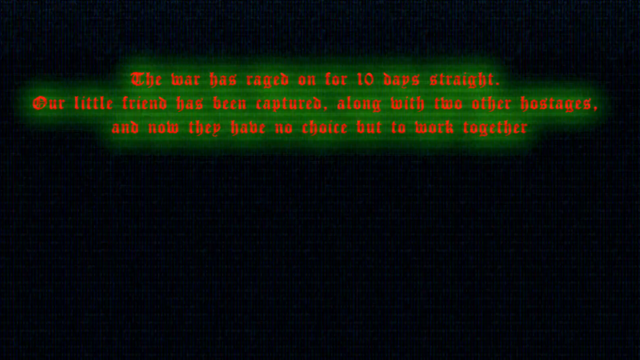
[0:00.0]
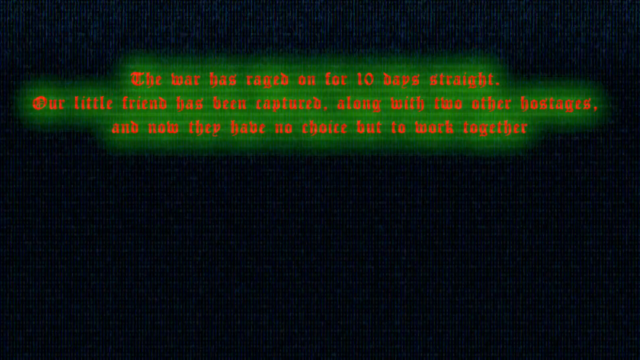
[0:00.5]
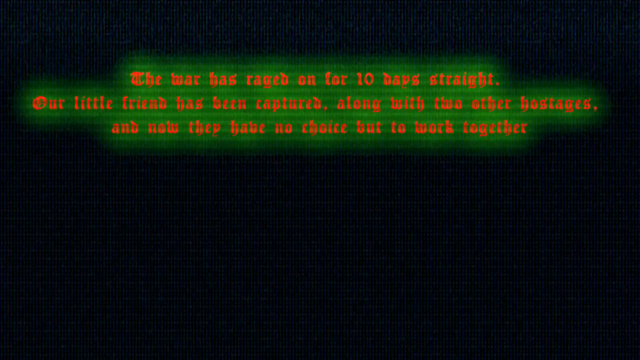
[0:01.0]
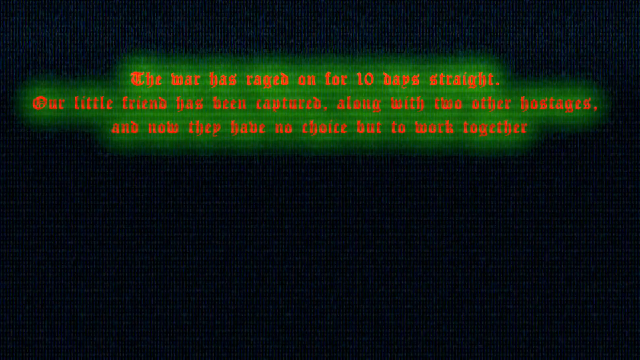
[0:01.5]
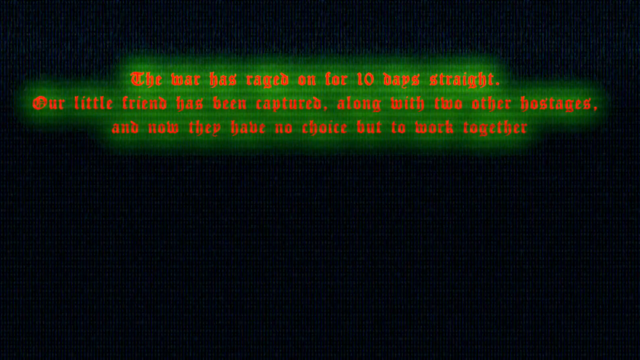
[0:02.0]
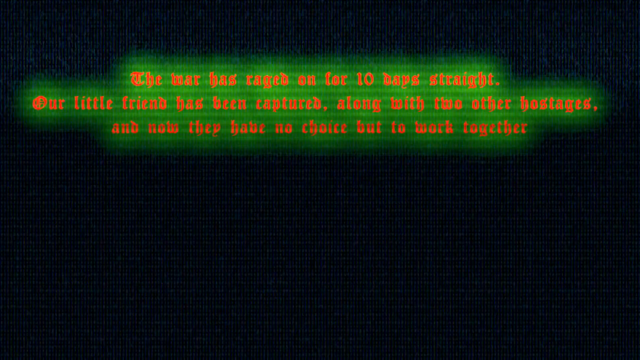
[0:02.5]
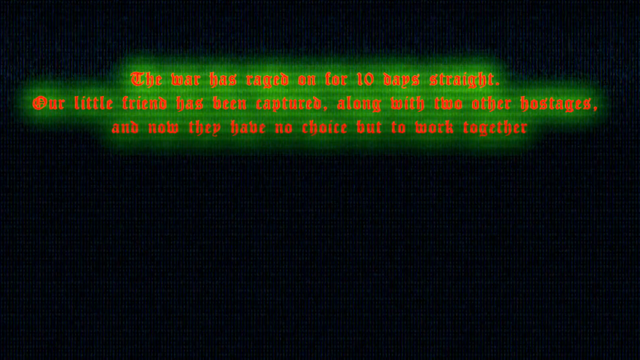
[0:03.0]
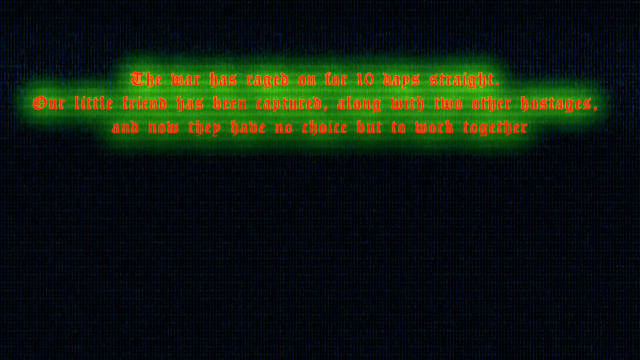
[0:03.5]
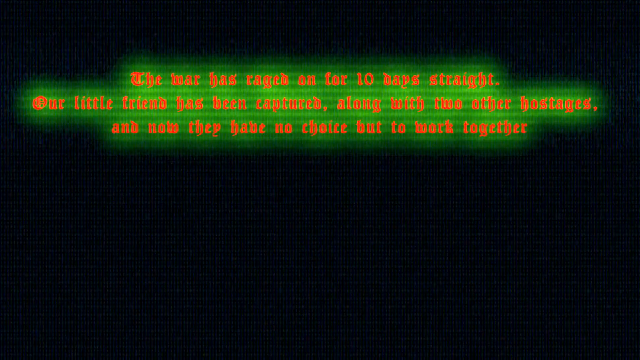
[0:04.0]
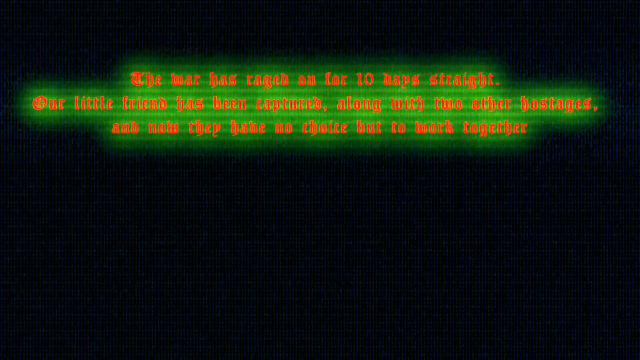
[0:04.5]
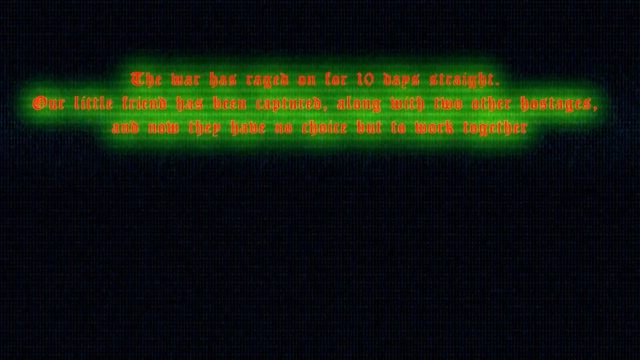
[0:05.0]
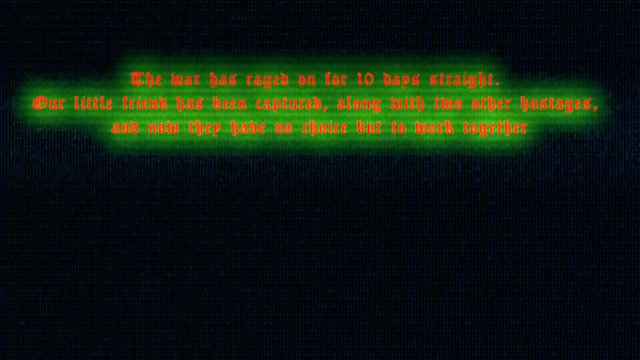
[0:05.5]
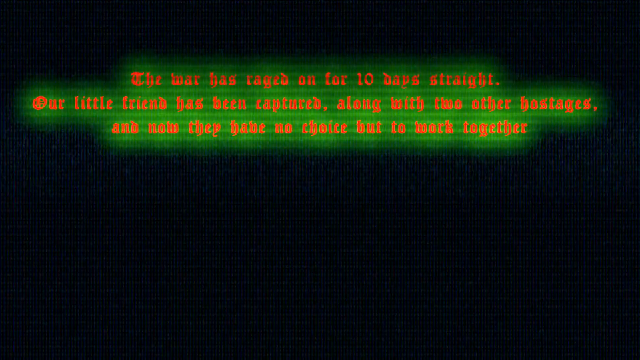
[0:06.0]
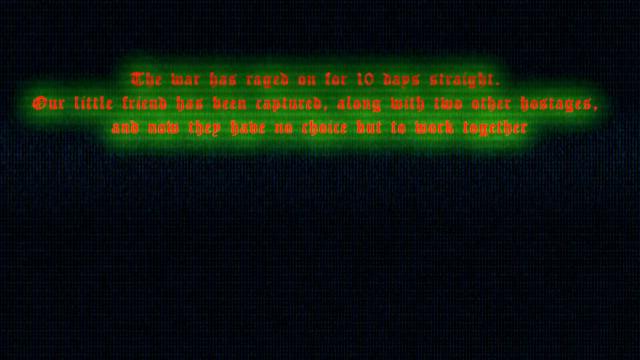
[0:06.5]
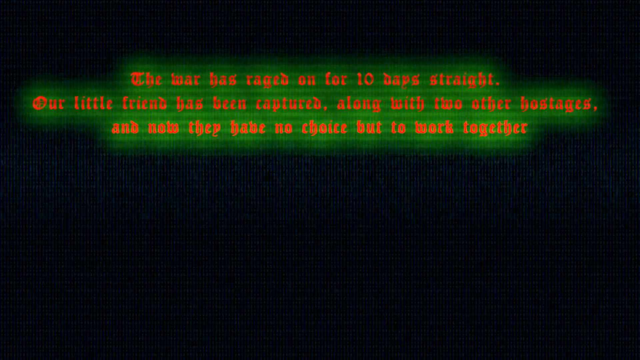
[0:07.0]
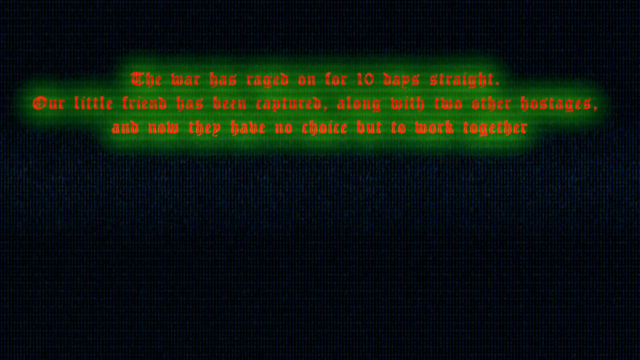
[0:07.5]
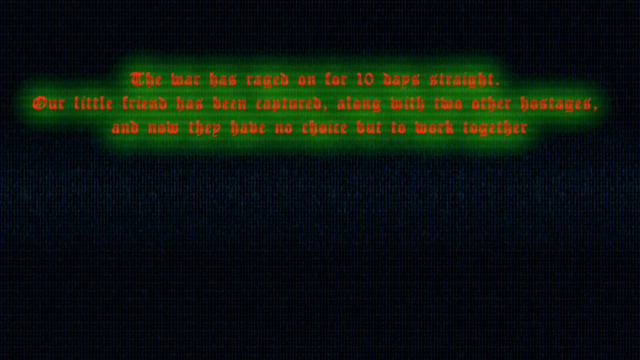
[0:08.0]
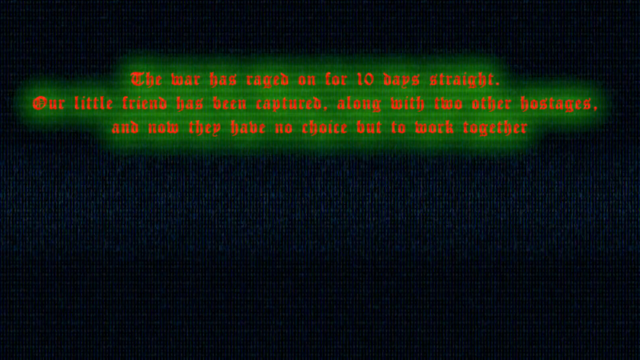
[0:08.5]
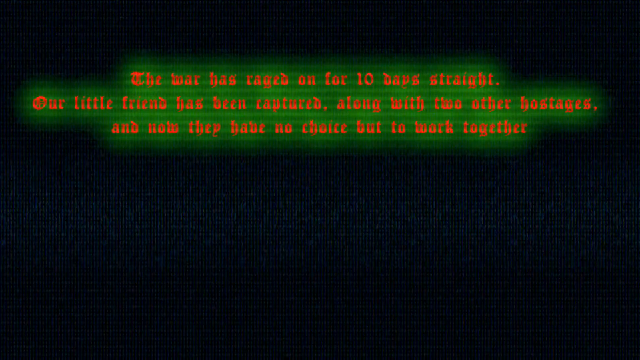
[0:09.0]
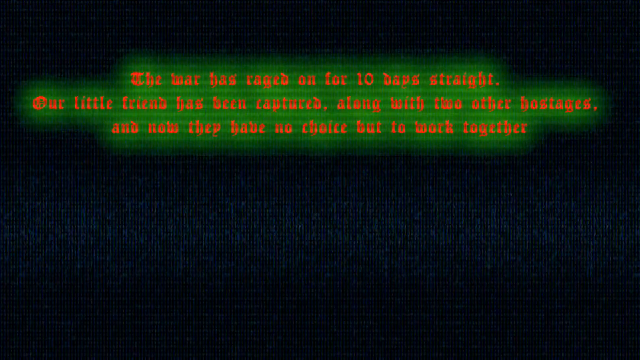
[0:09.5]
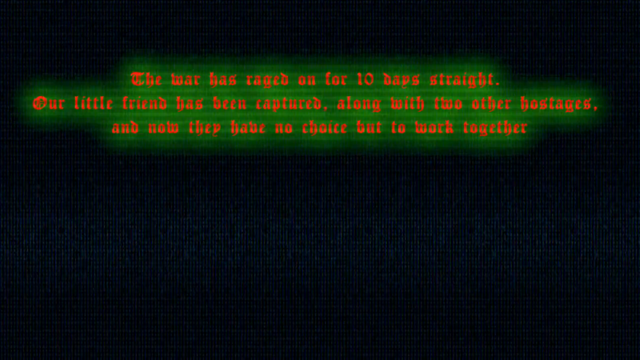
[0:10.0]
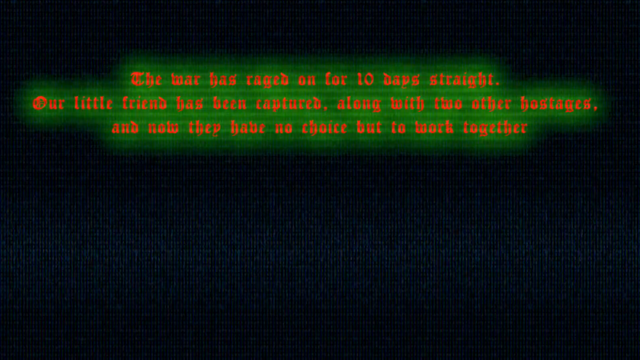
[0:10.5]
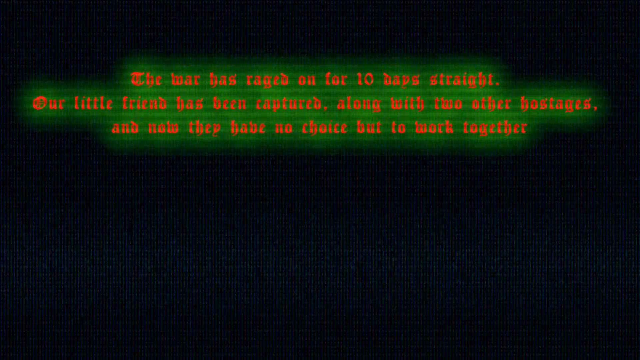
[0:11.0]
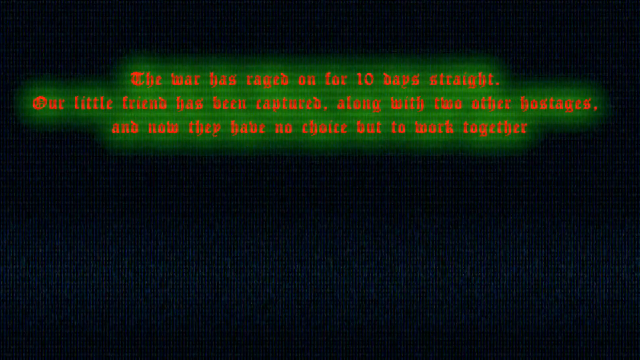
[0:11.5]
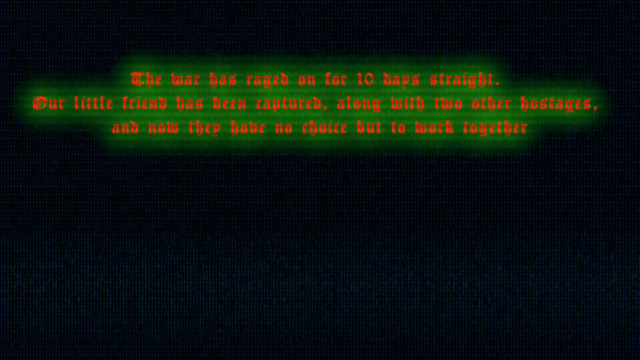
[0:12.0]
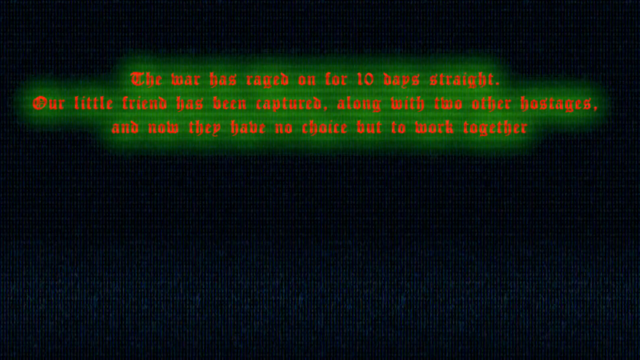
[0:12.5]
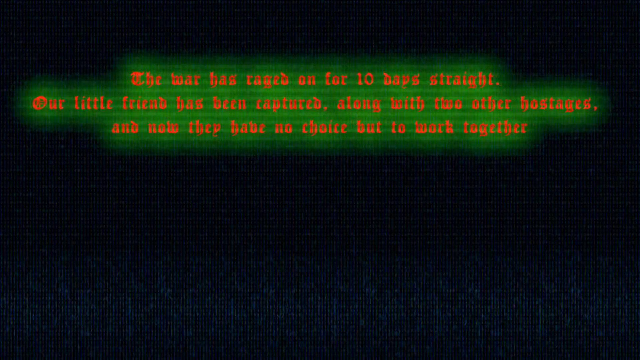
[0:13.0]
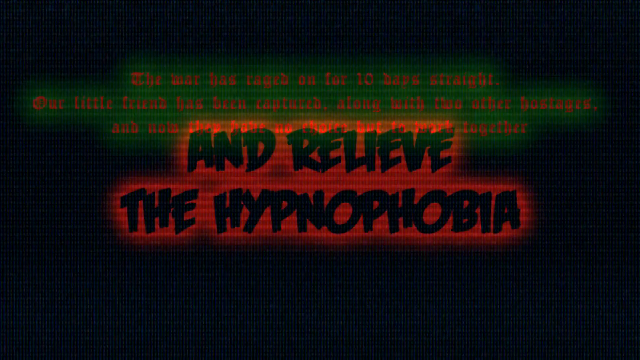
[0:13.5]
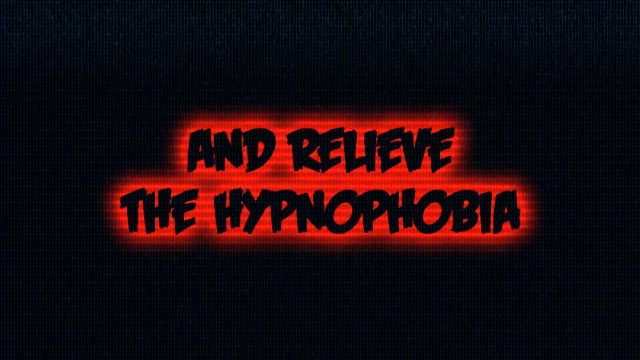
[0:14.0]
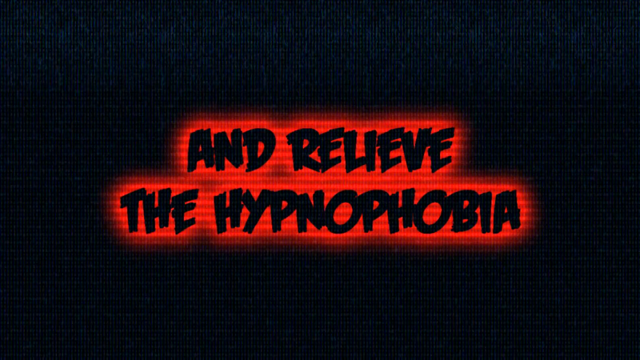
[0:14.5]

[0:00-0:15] The video opens with writing that is hard to read, with no picture playing. It seems to say "and relief the hypnophobia", though this is uncertain. The text is on a black background in orange writing with a green border. A little guy wearing a baseball cap is in the bottom right-hand corner, apparently holding a baseball glove. "And relief the hypnophobia" appears in black letters with a red highlight around the bottom.